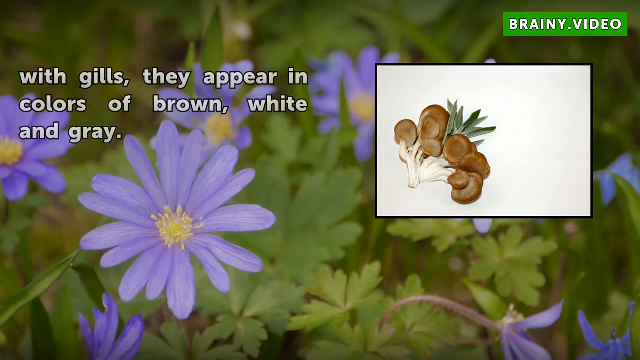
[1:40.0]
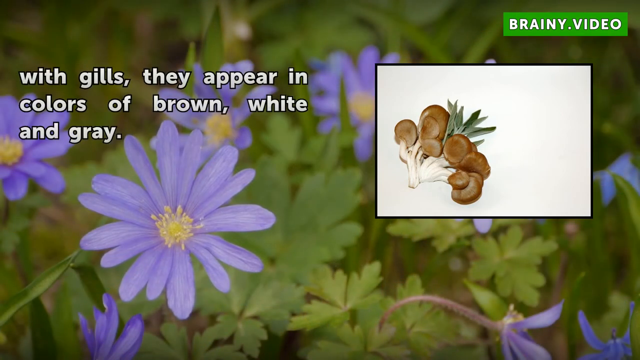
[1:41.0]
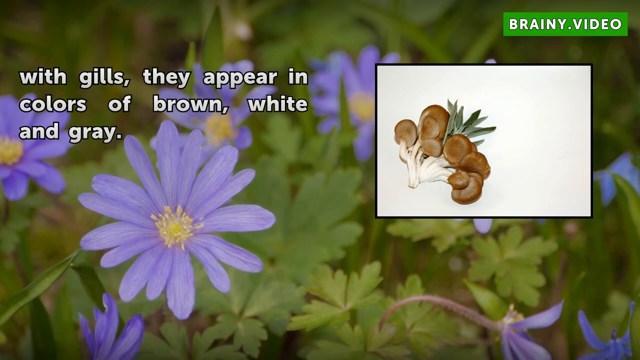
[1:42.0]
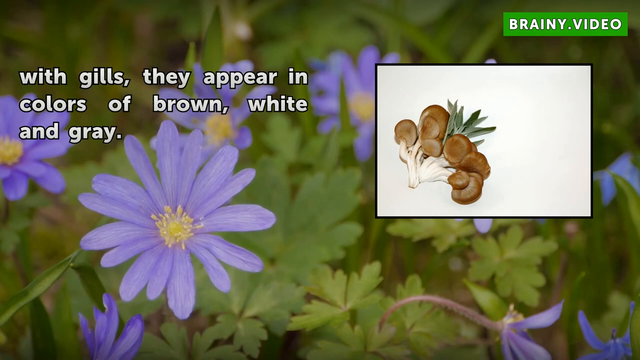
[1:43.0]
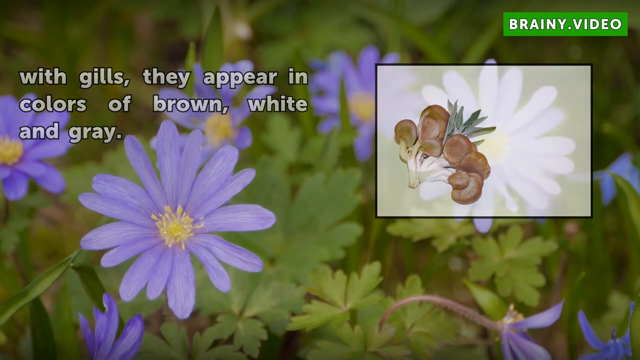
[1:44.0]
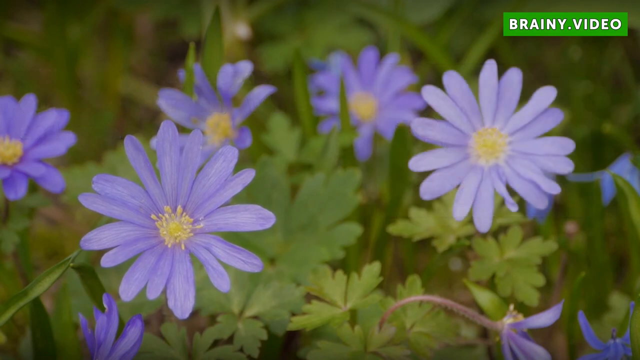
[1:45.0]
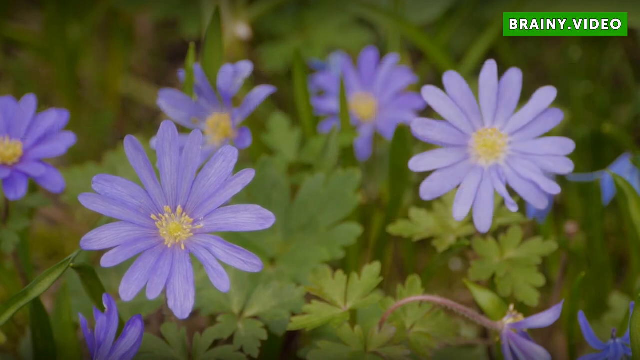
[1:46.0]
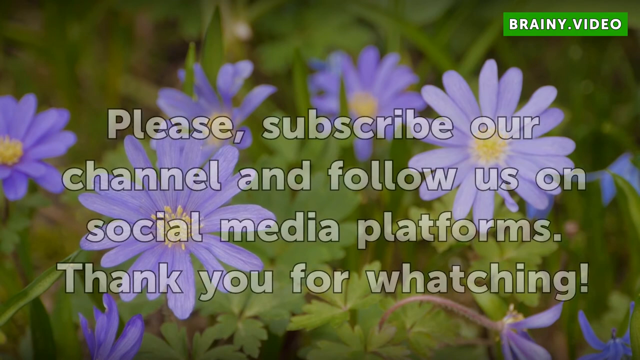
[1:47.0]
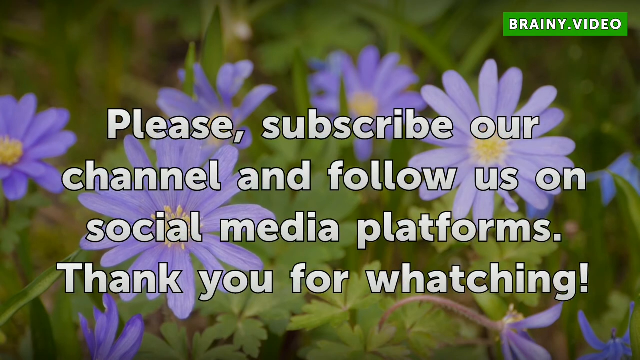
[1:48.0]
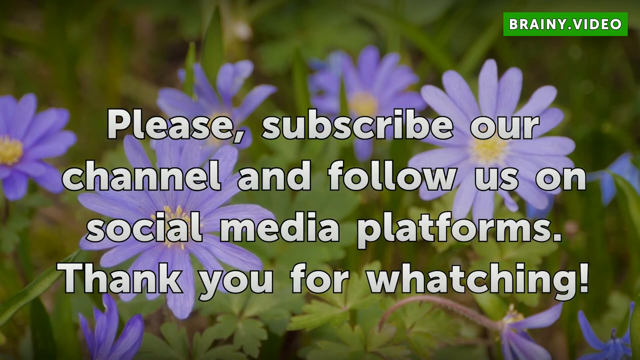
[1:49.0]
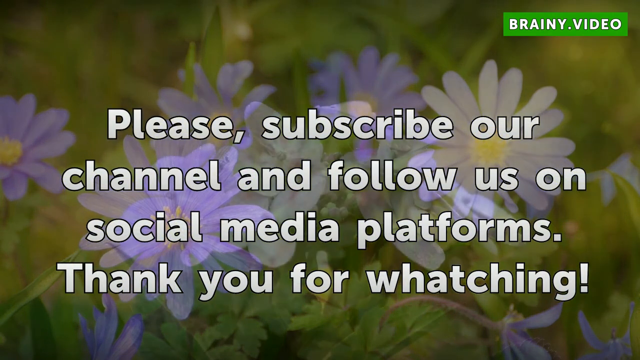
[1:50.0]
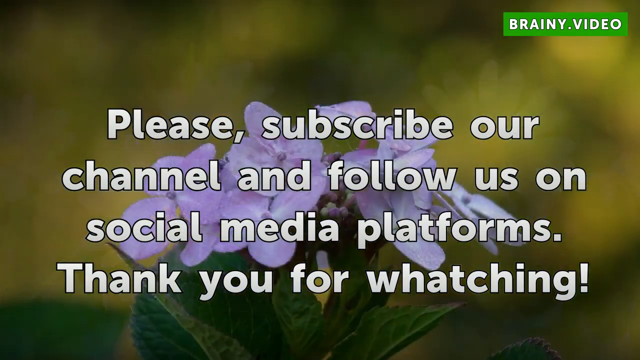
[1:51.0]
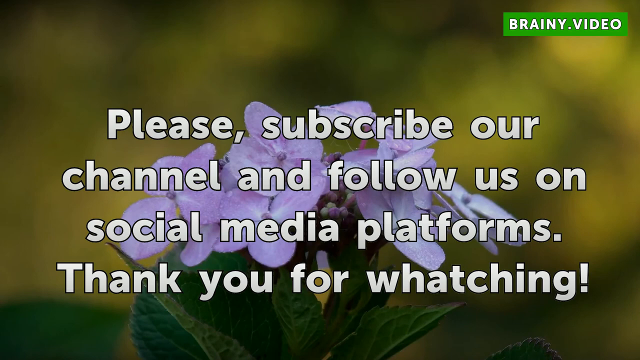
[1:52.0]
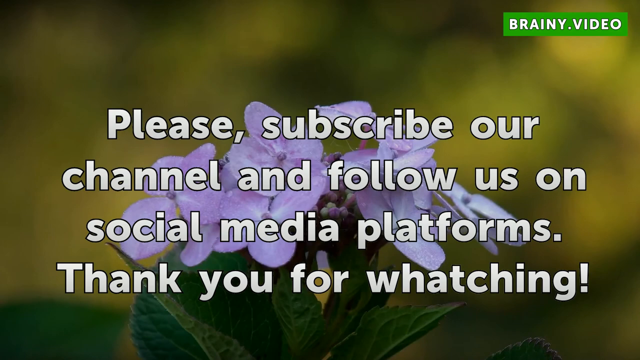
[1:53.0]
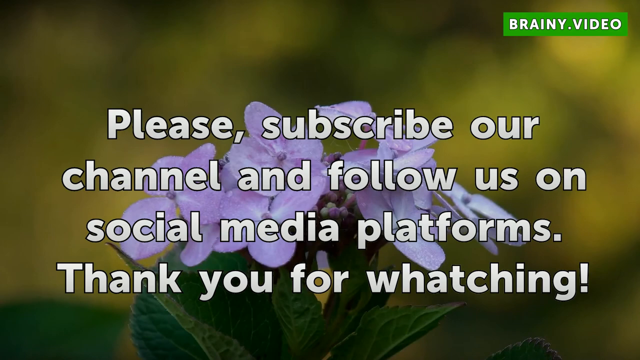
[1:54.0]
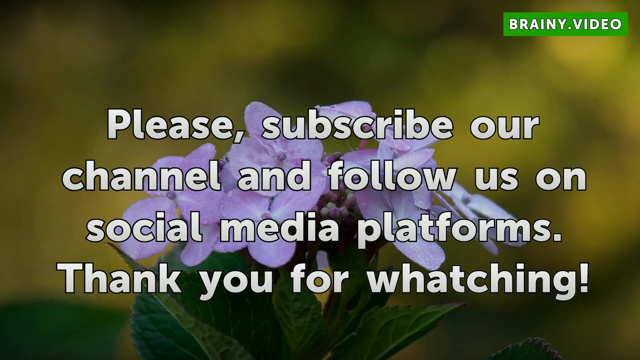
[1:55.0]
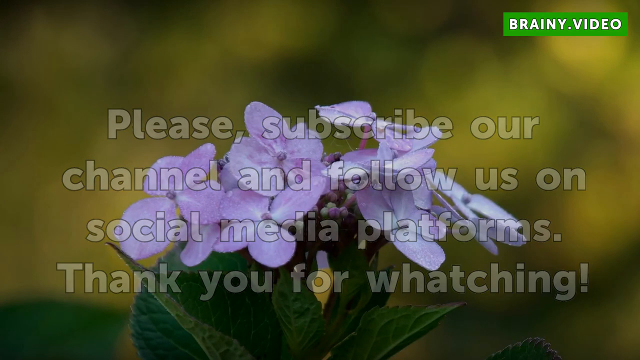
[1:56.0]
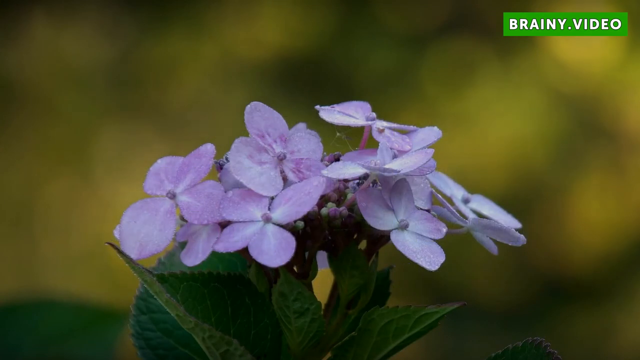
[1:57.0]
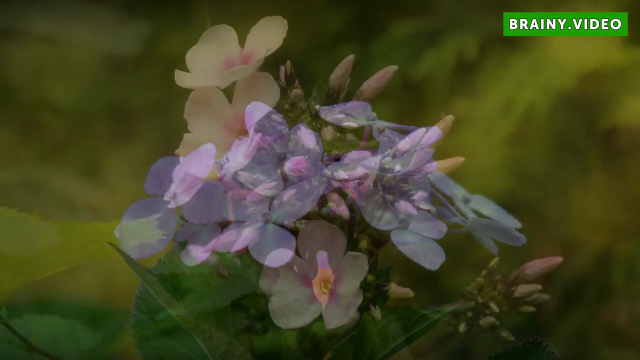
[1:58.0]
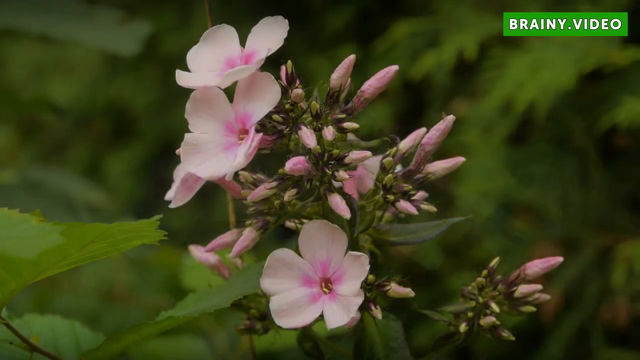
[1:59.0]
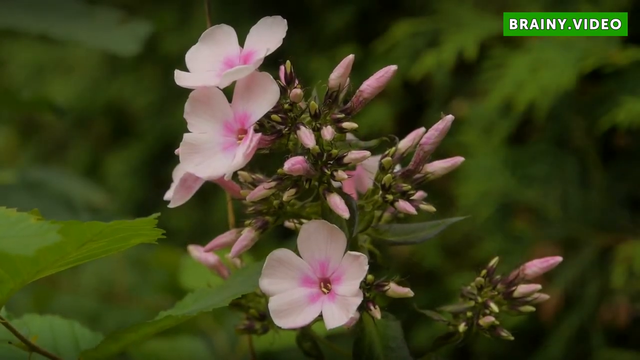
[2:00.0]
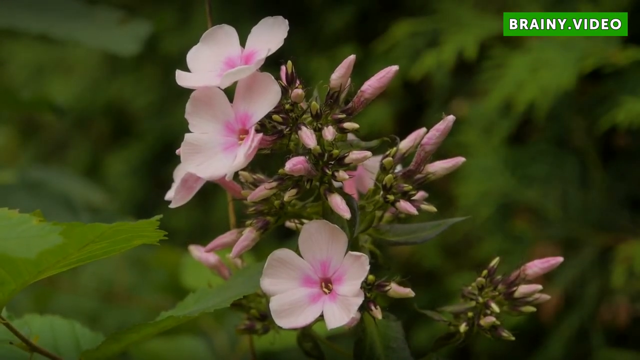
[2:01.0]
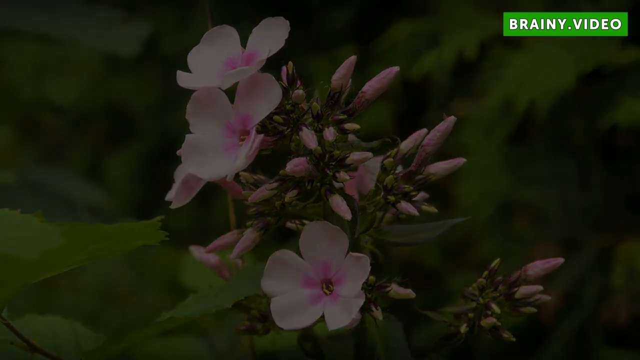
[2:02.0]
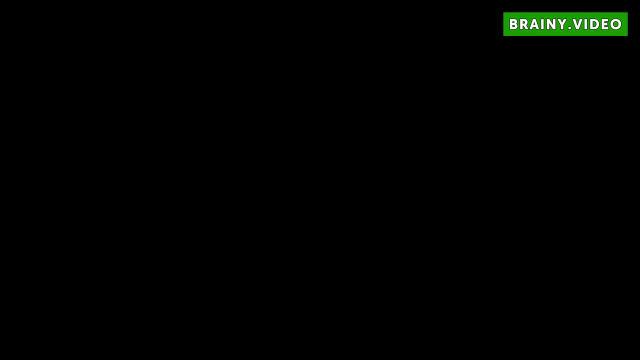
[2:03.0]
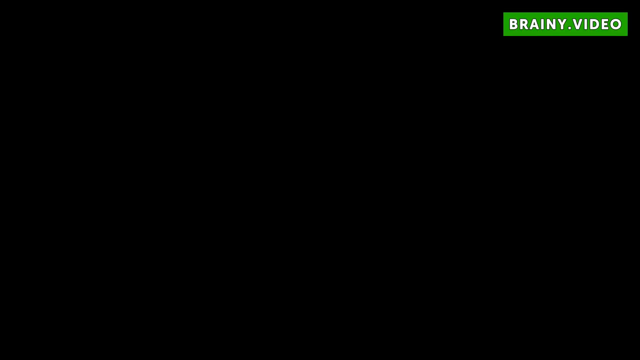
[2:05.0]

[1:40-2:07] A picture of oyster mushrooms with brown caps and white stems is on the right, and it looks like some green flowers or plants are growing out of the middle of them. On the left of the screen, text describes them, saying they have gills that appear in colors of brown, white, and gray. In the background are purple flowers with yellow pistils growing in their middles. The text goes away, and new text reads: "Please subscribe to our channel and follow us on social media platforms. Thank you for watching." The scene then changes to small purple flowers in the background. The final flowers are pink and white, with petals that are pink in the center and white toward the ends, and pistils that look yellowish.